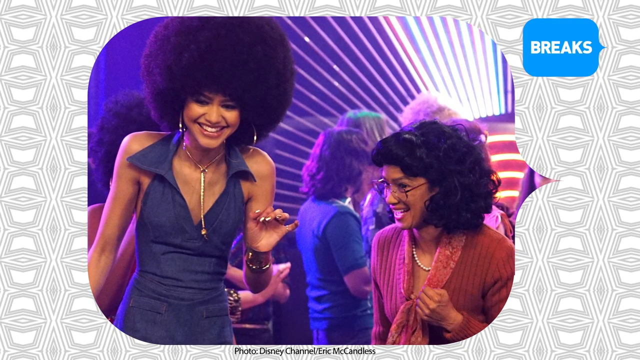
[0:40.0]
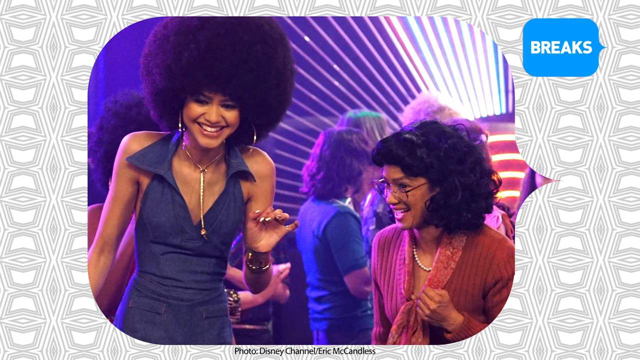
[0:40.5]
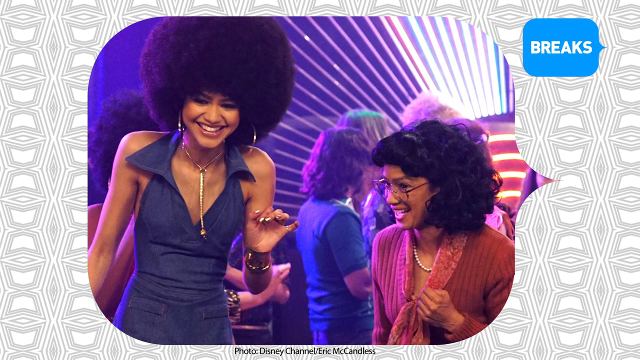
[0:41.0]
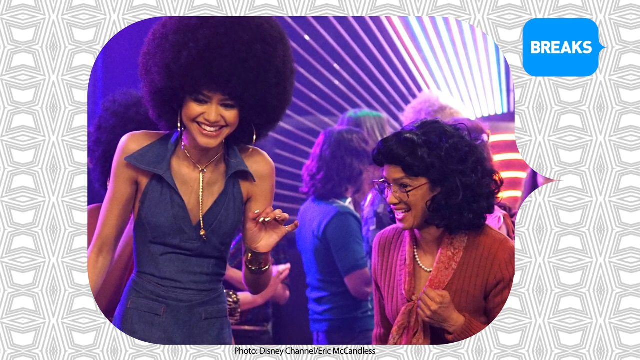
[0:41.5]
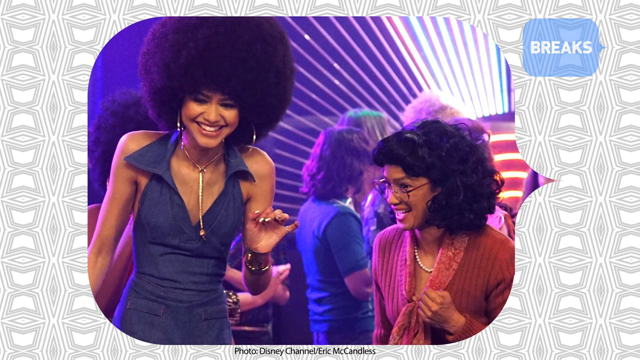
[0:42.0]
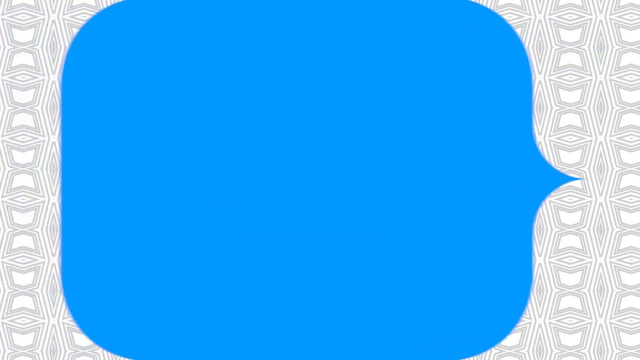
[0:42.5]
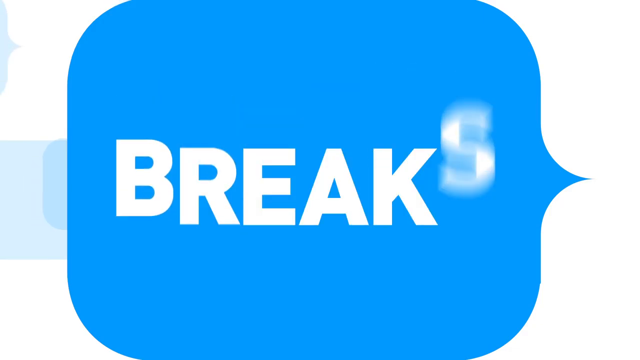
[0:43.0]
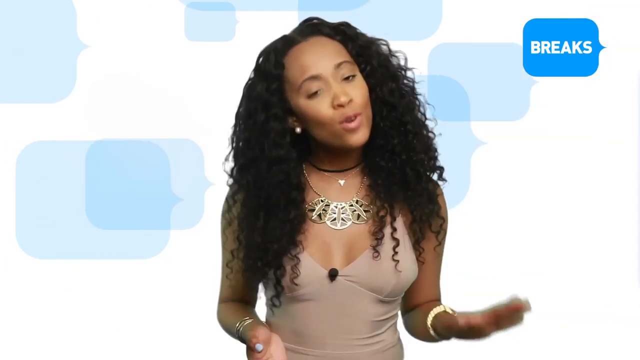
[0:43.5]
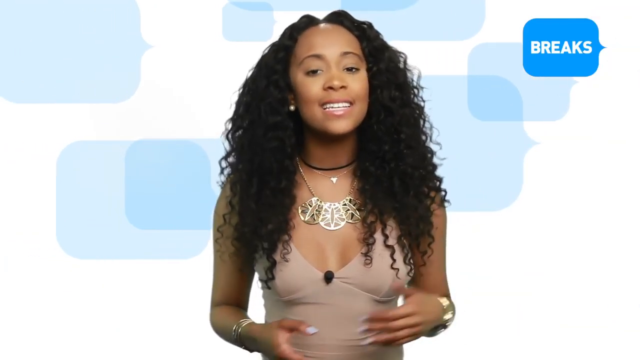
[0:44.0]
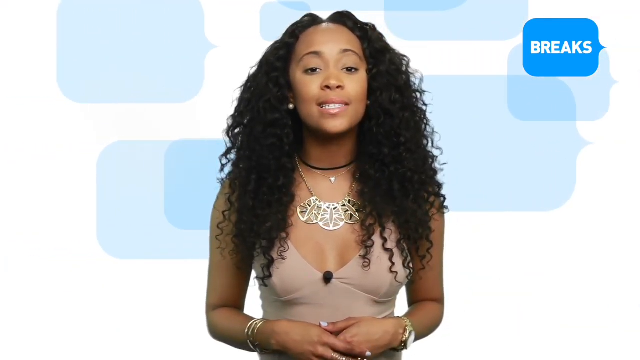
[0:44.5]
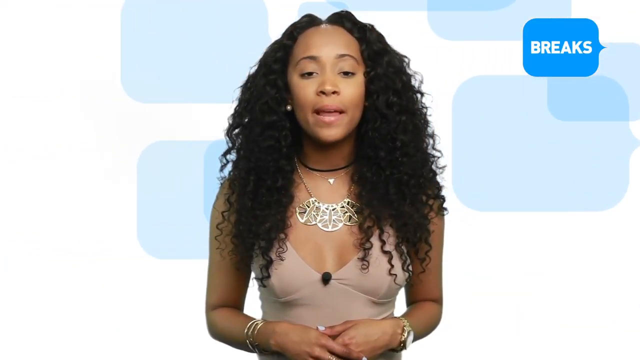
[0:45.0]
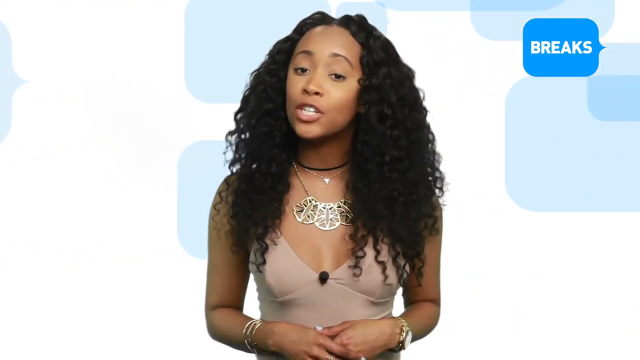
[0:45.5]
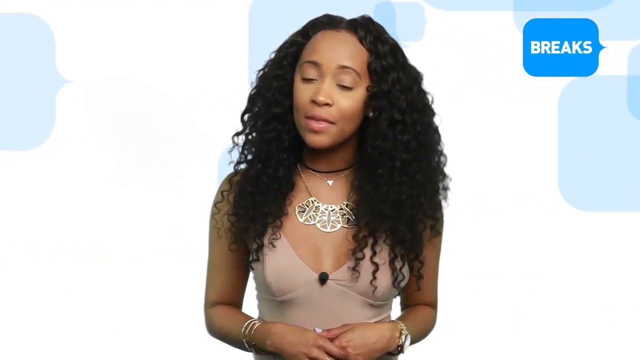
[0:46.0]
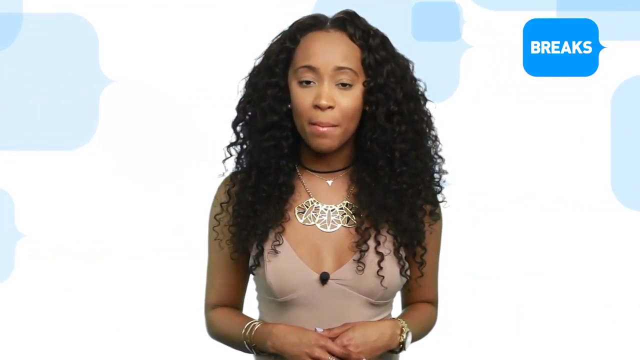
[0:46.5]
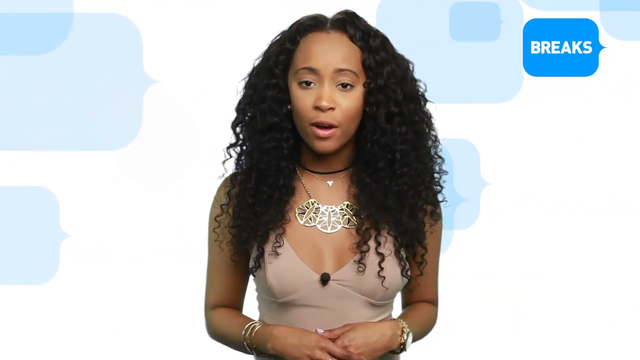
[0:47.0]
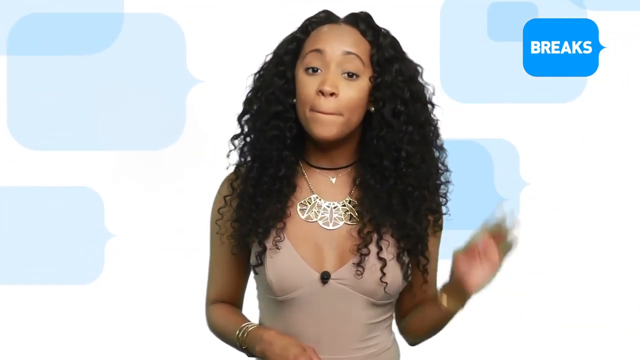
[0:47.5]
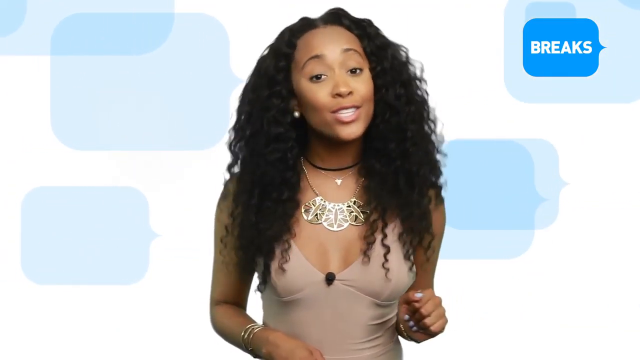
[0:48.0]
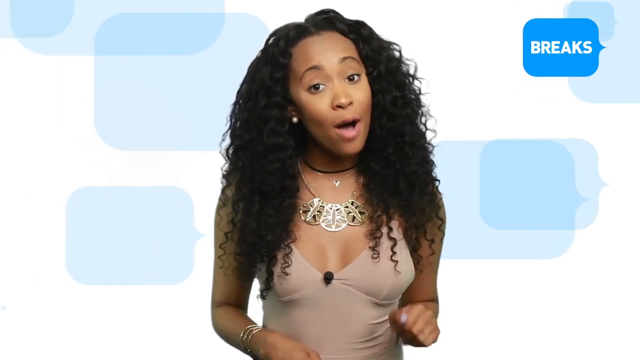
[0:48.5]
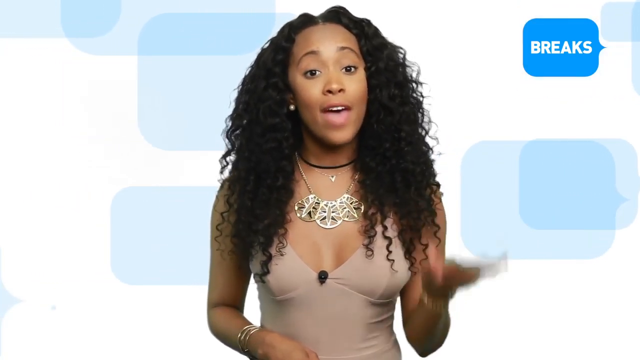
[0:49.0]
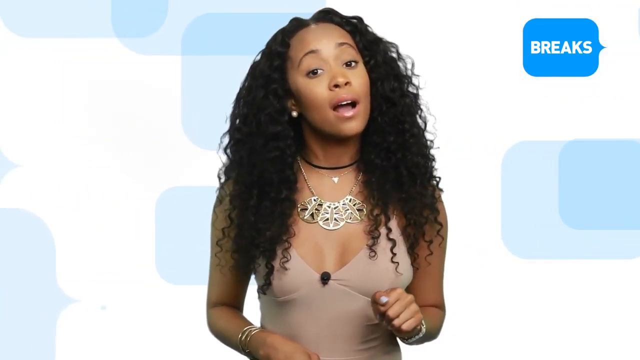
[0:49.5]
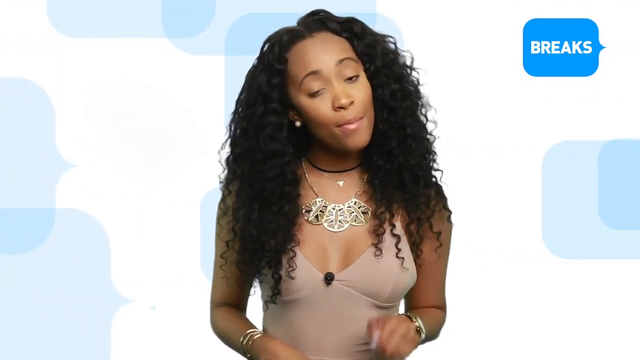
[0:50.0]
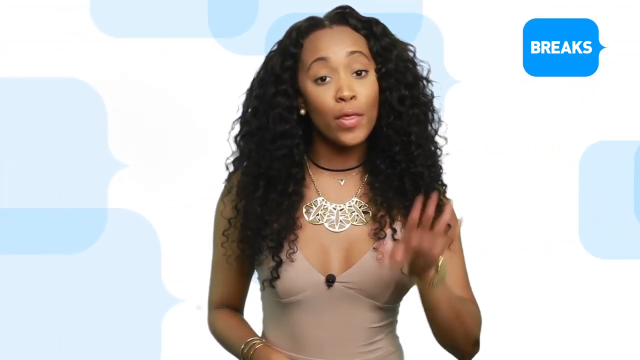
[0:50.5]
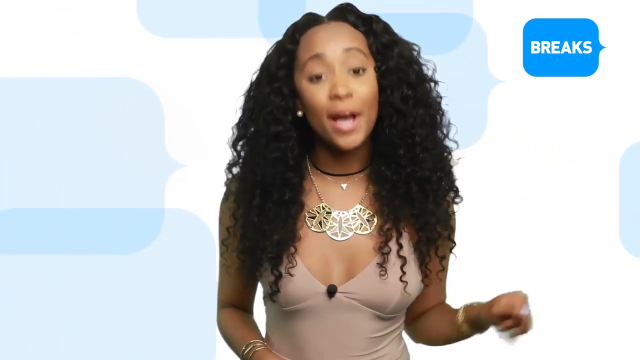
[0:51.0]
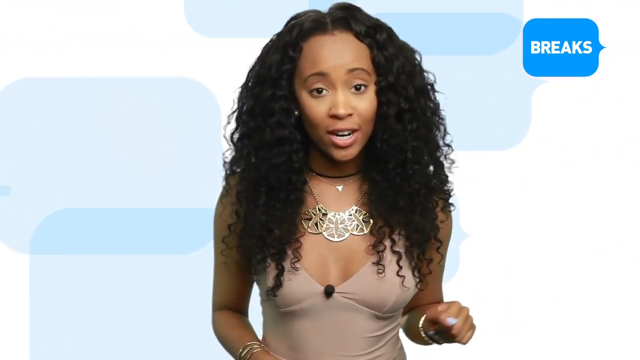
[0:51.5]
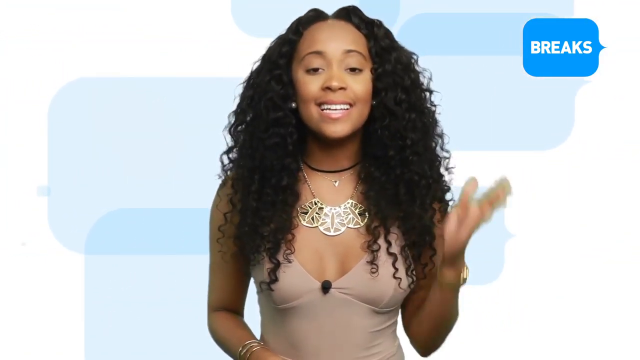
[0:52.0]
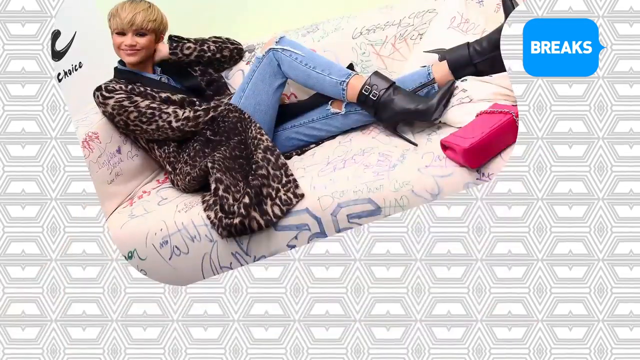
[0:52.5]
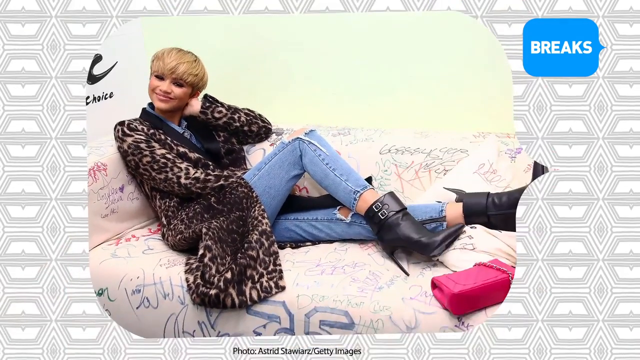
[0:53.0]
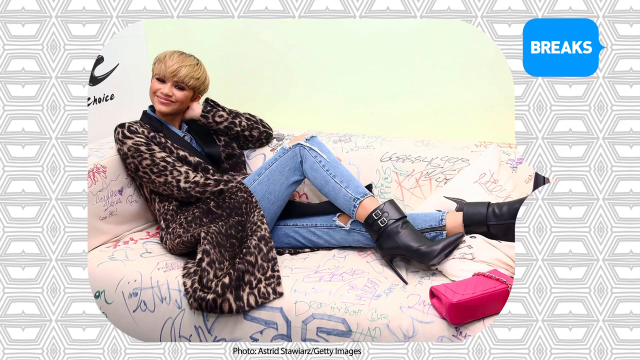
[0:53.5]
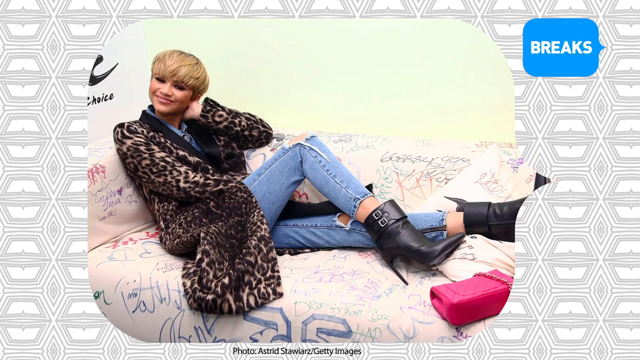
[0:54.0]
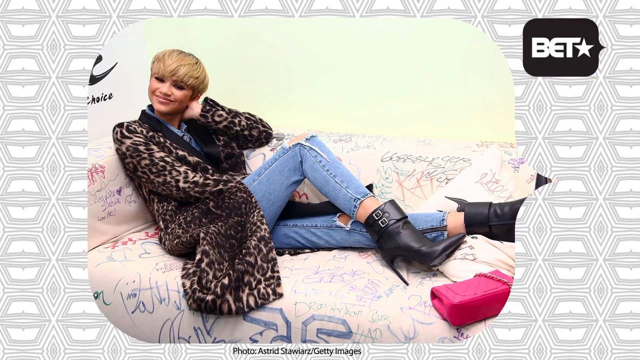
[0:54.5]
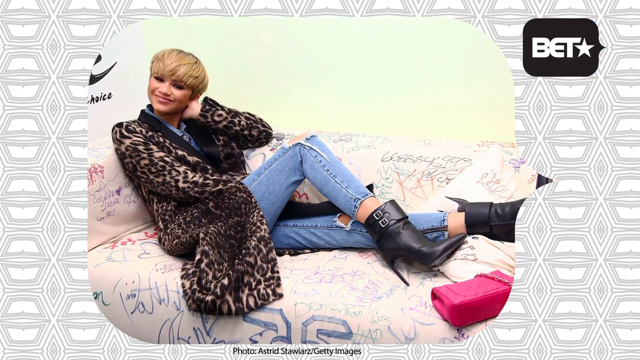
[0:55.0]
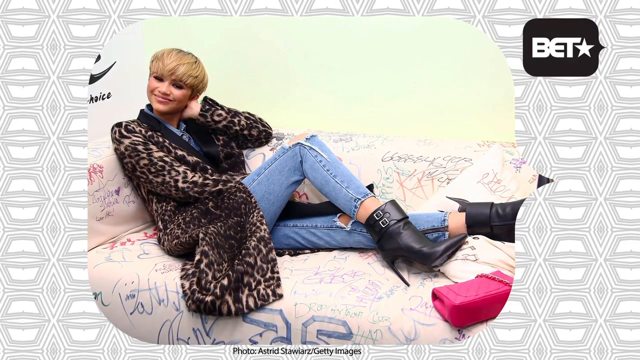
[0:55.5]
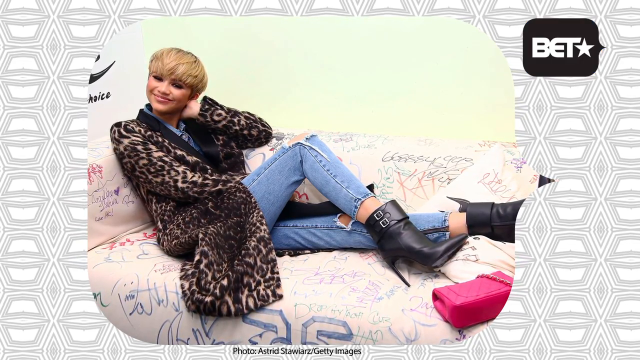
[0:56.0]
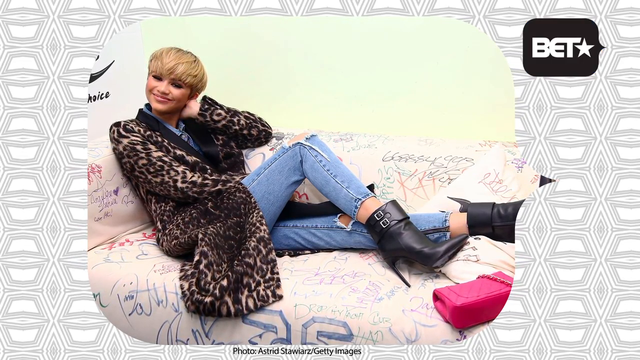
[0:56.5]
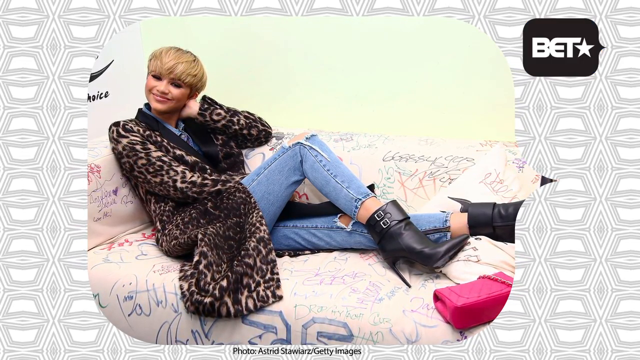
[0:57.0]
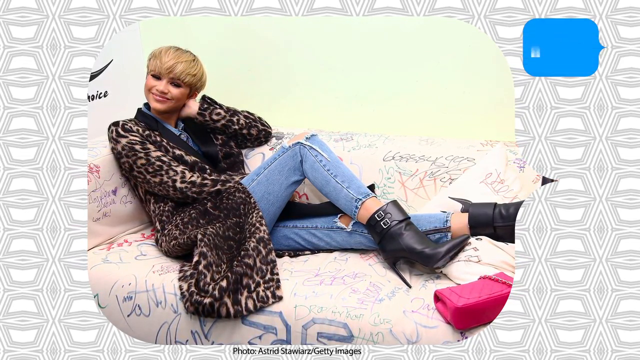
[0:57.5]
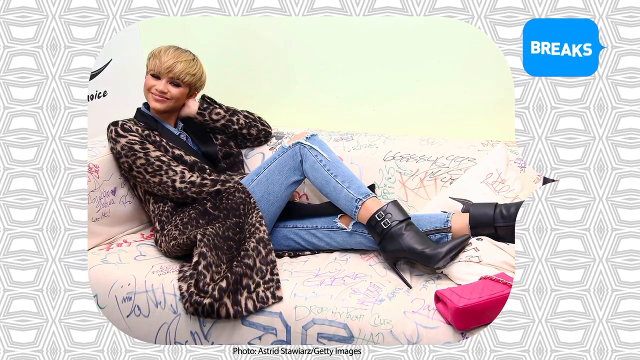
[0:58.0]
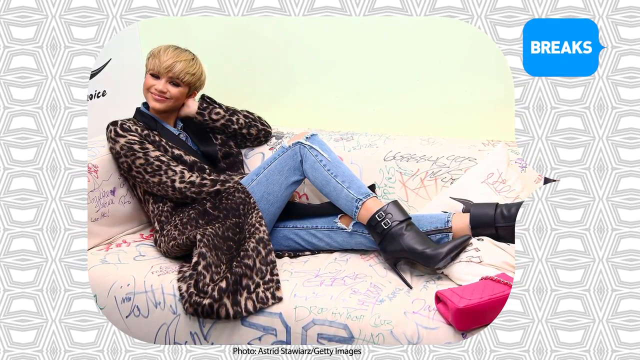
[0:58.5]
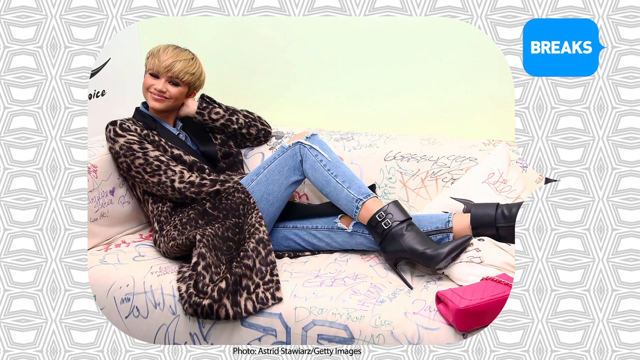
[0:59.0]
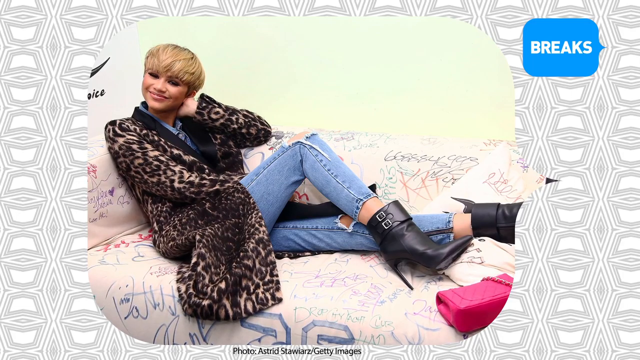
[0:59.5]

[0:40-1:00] The photograph of the two women is in the middle of the screen, and a blue speech bubble in the top right corner has white writing that says "Breaks". The photo disappears and a giant blue speech bubble with the word "breaks" appears in the middle of the screen. The video cuts back to the woman talking to the camera. She tilts her head to the right and back to centre, puts her right palm outwards and brings it back in, then tilts her head to the left. She swipes her right hand down and turns it into a fist, tilting her head to the left as she does so, then raises her hand and makes a semi-circle motion. The video then cuts to another bubble appearing in the middle of the screen, with white and black hexagons as a background. In it is a white woman with short blonde hair, wearing a long leopard skin coat, jeans ripped at the knees and black high-heeled ankle boots, with a bright pink handbag under her foot. The couch material appears to have writing on it, and the word "choice" in black is just to the left of her head. The speech bubble in the top right corner has turned black with white writing; it alternates between blue and black throughout the video.